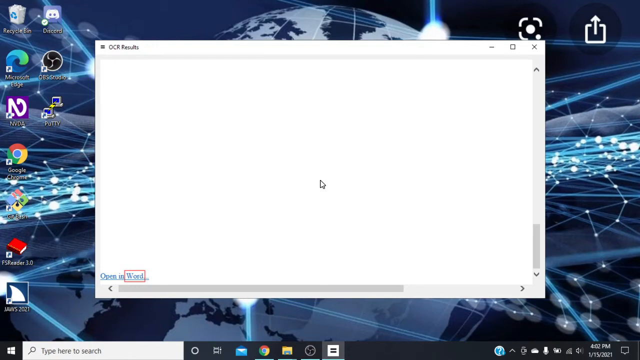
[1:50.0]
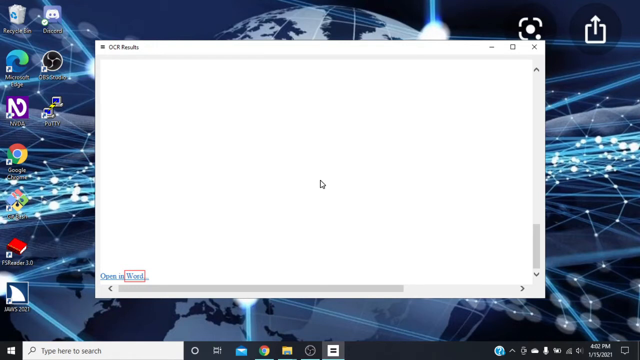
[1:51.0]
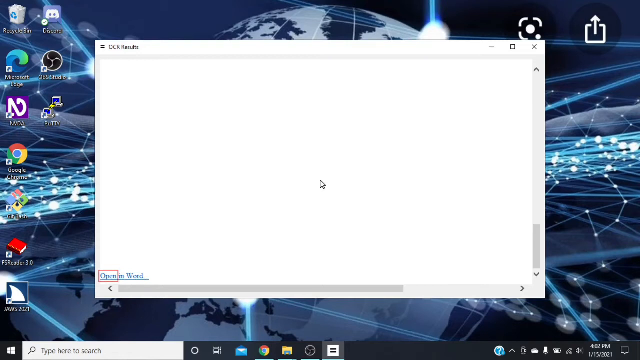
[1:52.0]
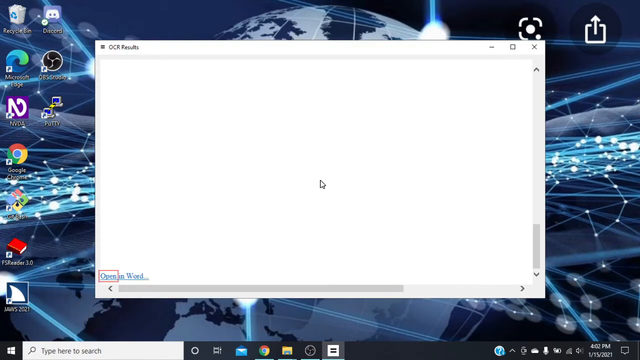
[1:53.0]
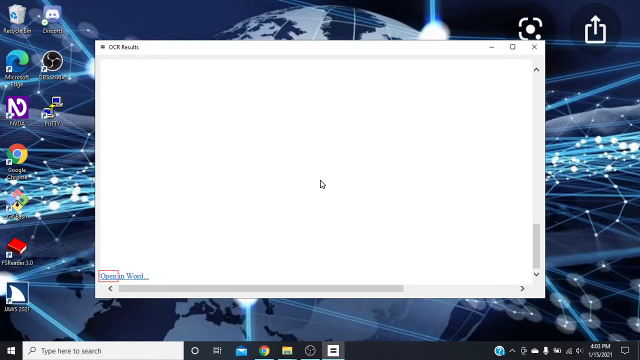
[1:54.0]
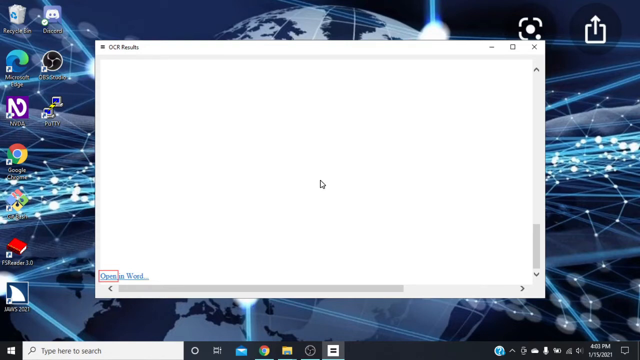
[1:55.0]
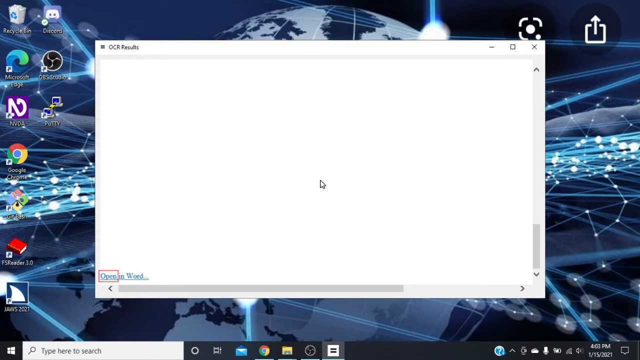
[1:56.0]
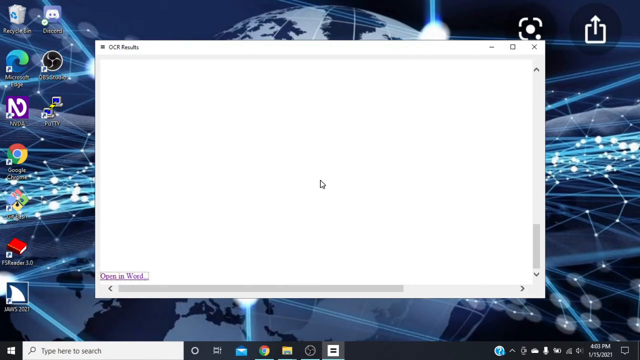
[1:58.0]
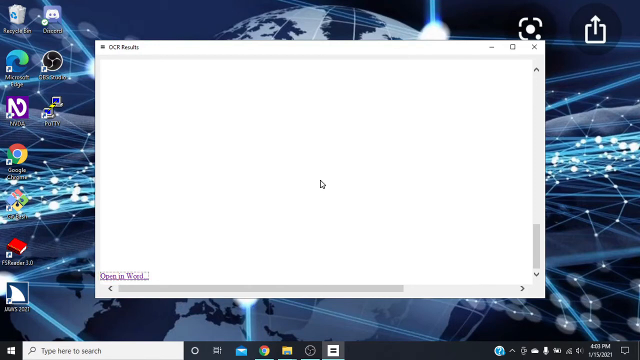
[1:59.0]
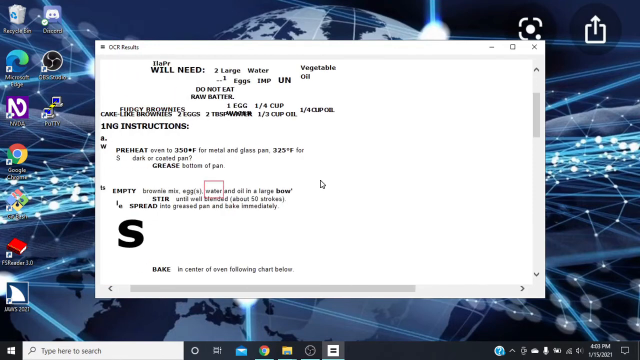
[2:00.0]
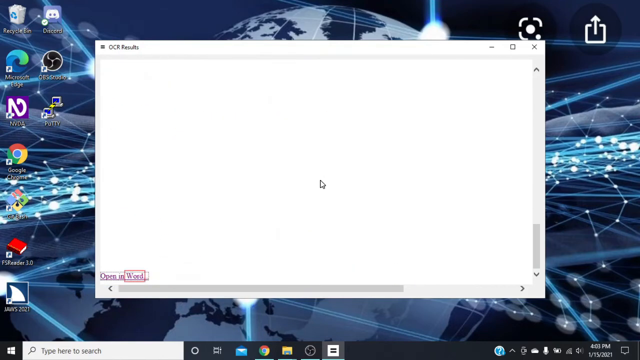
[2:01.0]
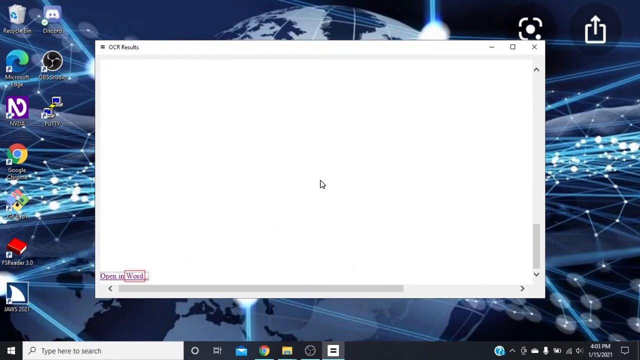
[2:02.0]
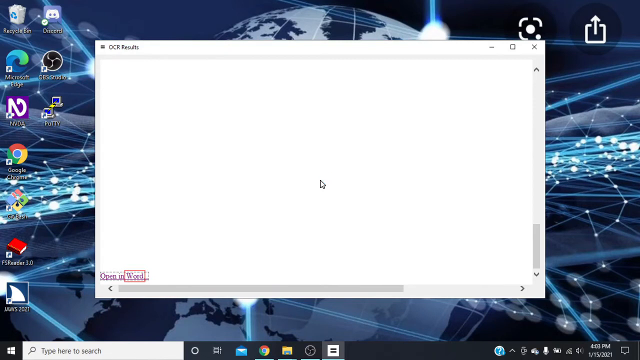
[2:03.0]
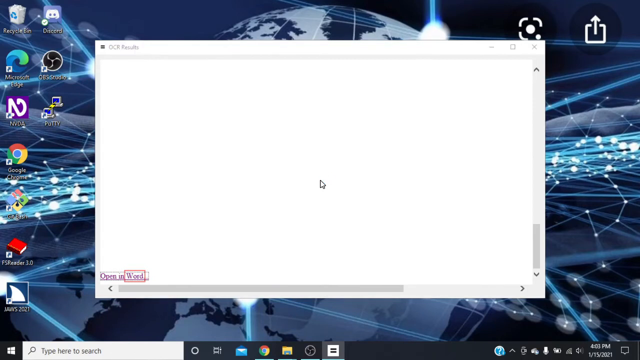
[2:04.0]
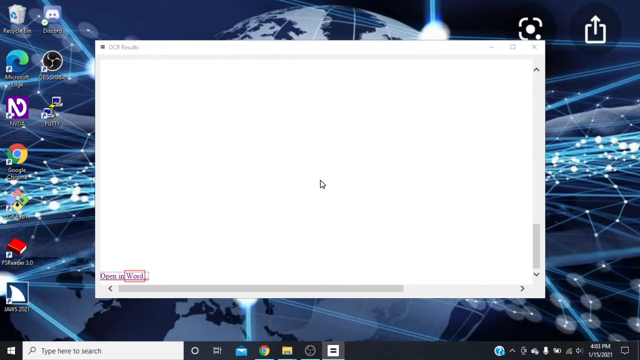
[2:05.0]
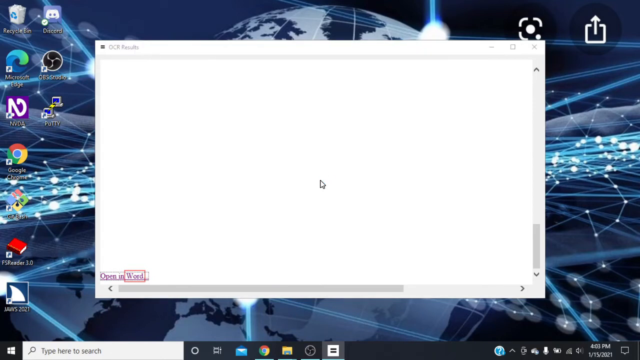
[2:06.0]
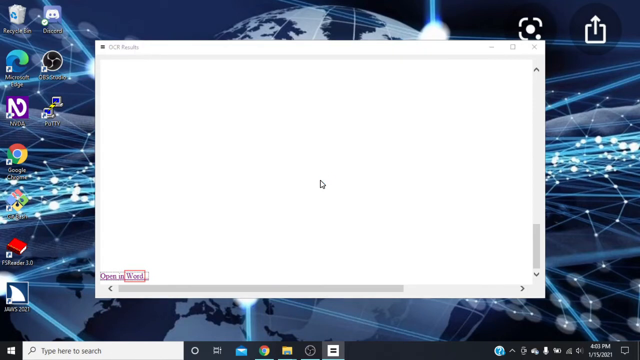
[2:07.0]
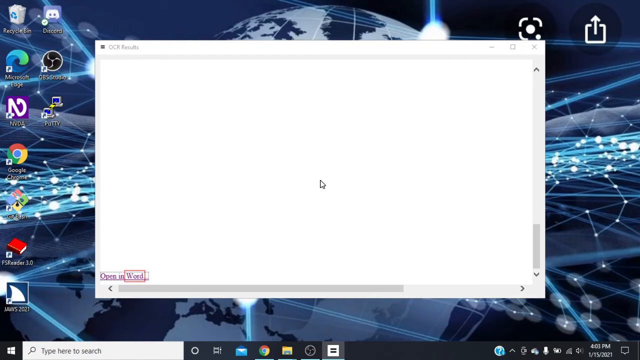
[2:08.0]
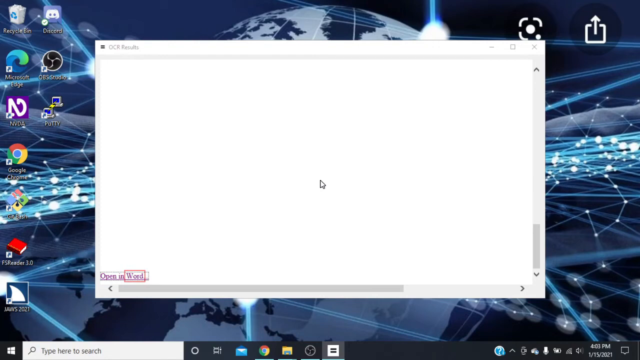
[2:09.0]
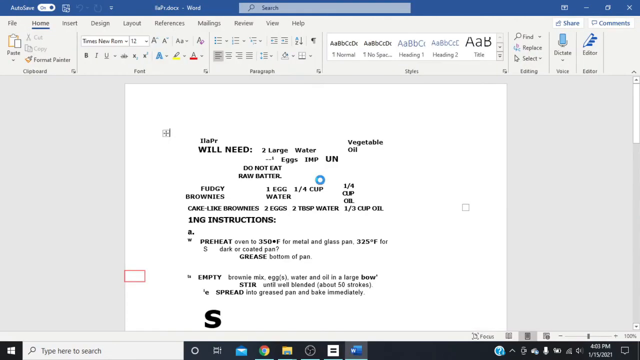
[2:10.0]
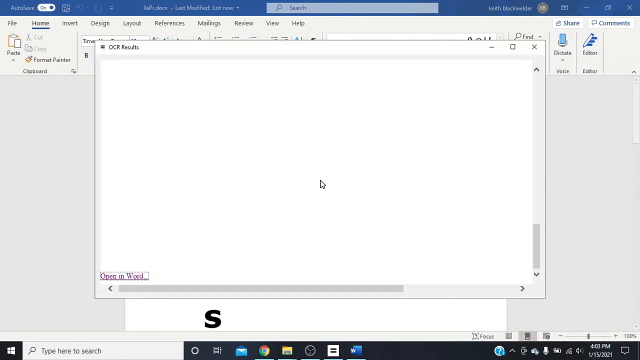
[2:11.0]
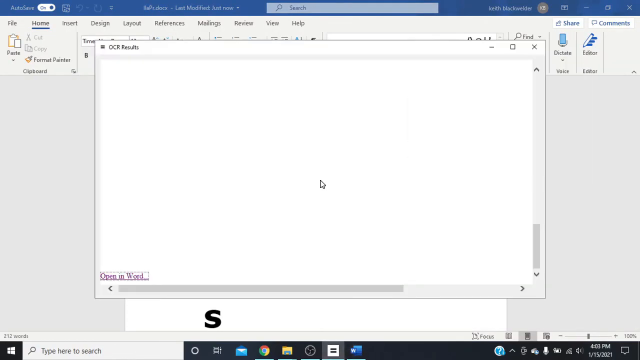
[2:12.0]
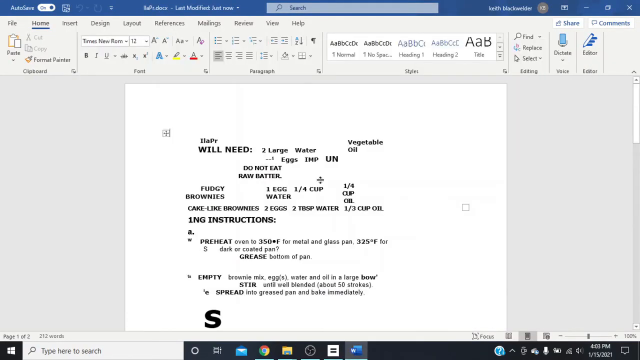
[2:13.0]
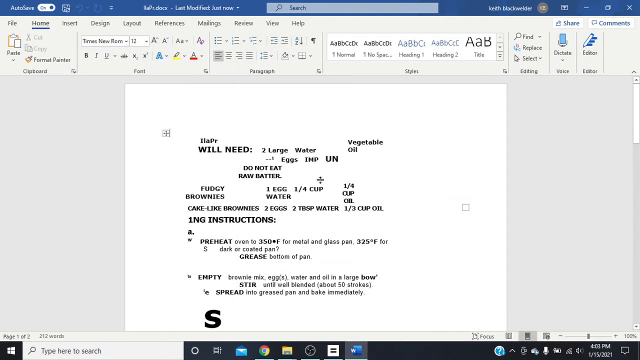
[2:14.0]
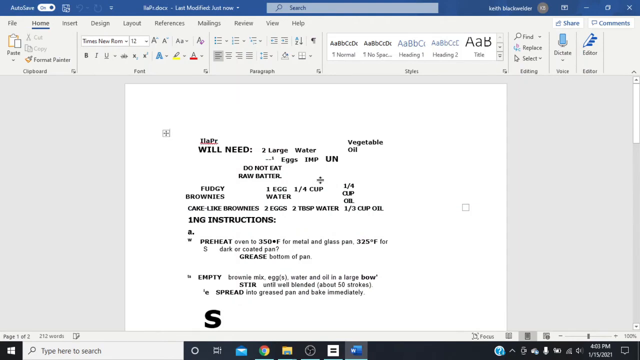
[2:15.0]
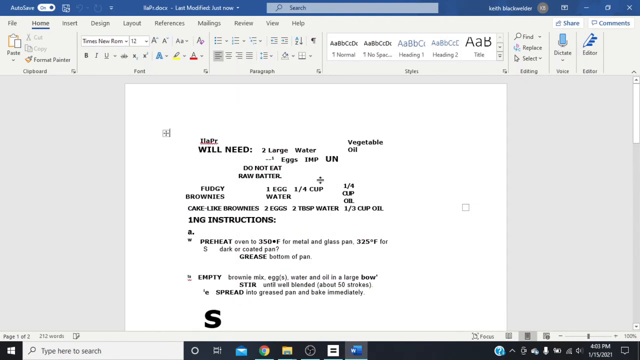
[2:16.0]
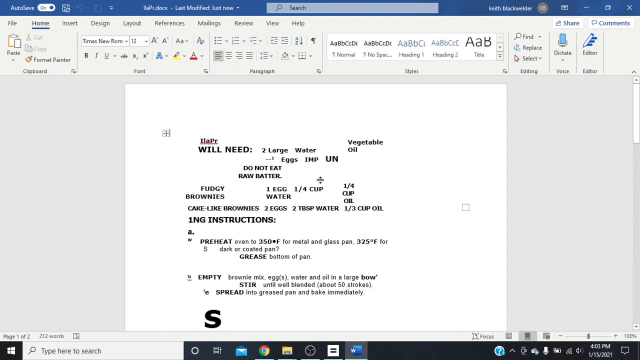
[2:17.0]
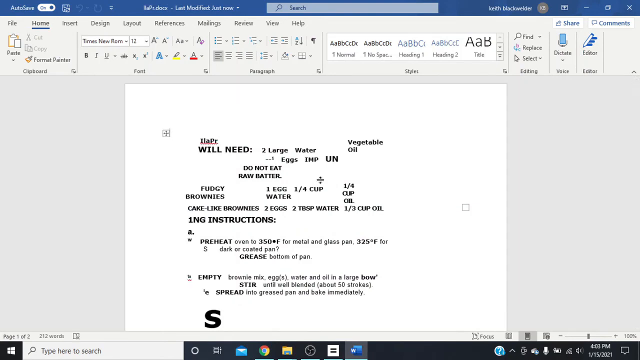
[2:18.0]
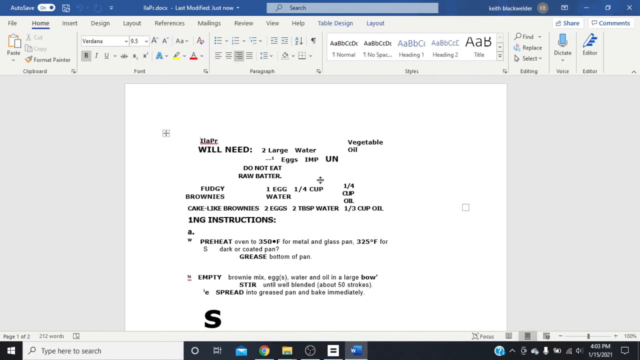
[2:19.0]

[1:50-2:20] The rectangle moves off the word "Word" and onto the word "open." The hyperlink has turned purple, showing it has been pressed. The view goes back to the beginning of the recipe and highlights the heading that says "will need," with the word "will" in the red rectangle. The user scrolls left and down through the document, revealing the "open in Word" hyperlink with the rectangle around it. It seems to take a while to load: a blue loading circle appears above the cursor and flashes a few times before the document opens in Word. A screen pops up over the document showing the different tabs the user has open; the user clicks on the OCR Results tab before exiting out of it.